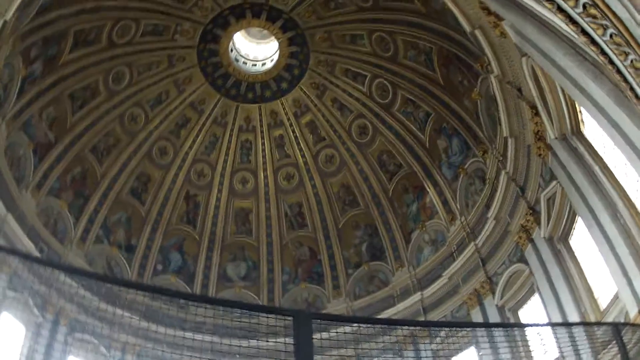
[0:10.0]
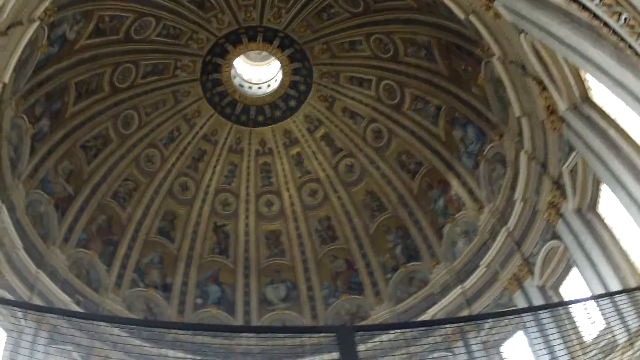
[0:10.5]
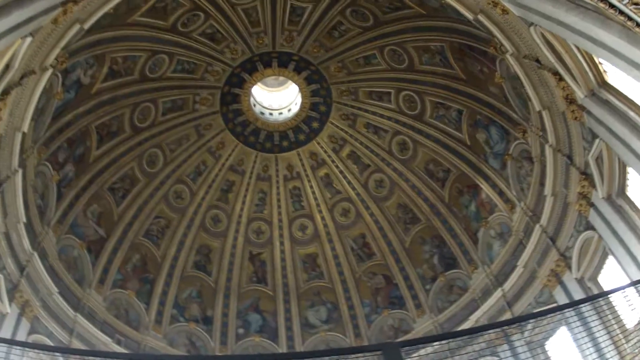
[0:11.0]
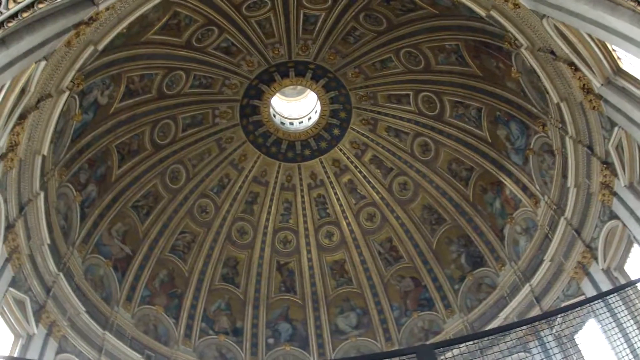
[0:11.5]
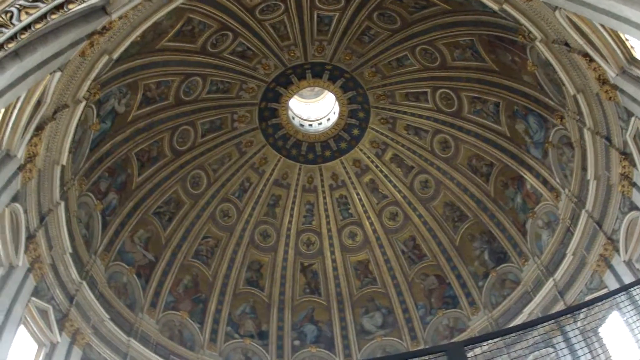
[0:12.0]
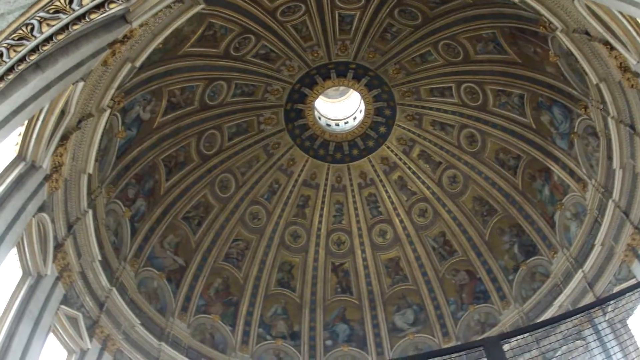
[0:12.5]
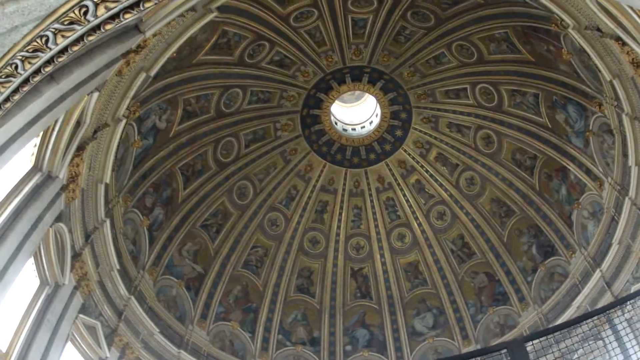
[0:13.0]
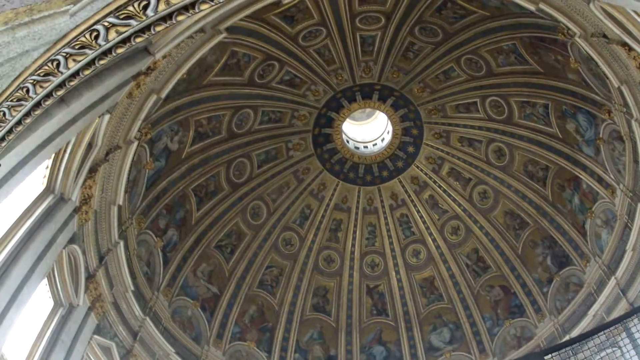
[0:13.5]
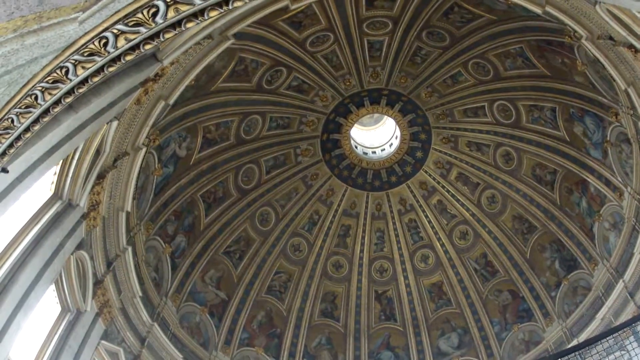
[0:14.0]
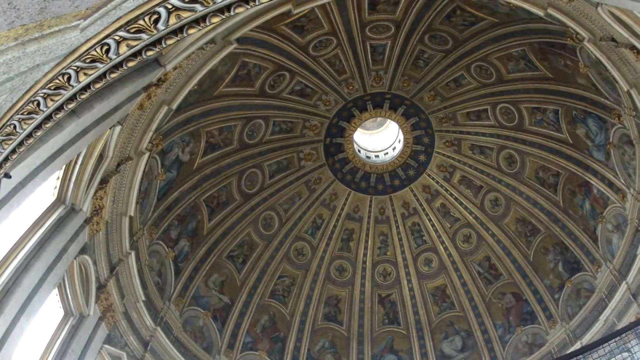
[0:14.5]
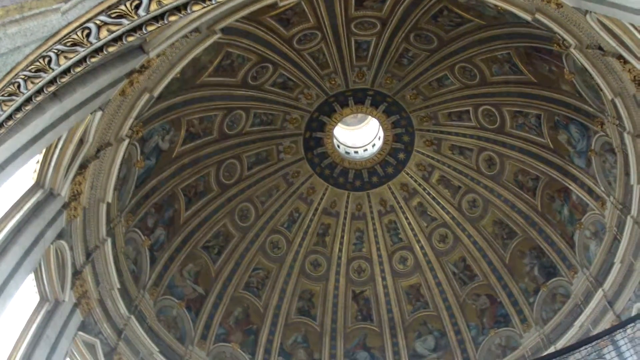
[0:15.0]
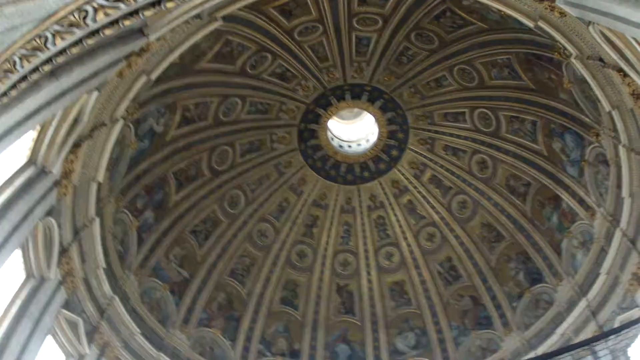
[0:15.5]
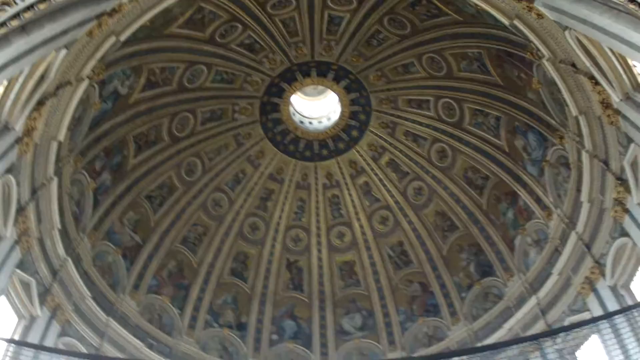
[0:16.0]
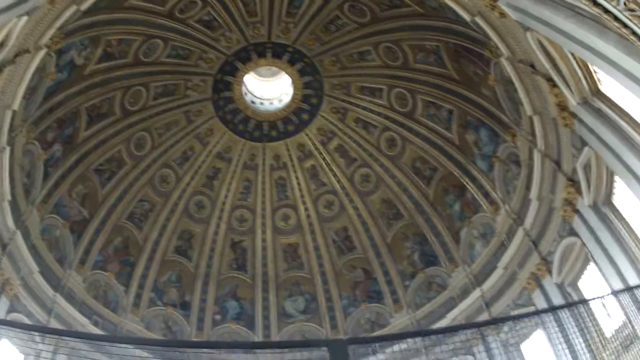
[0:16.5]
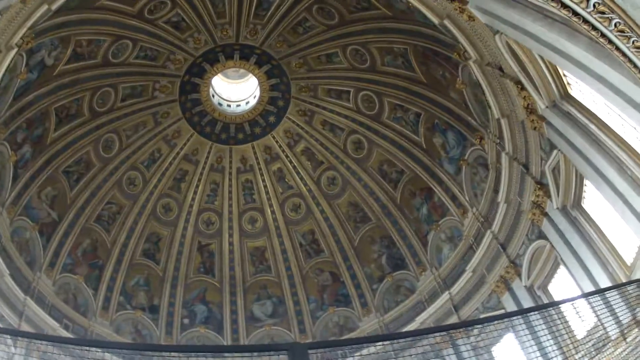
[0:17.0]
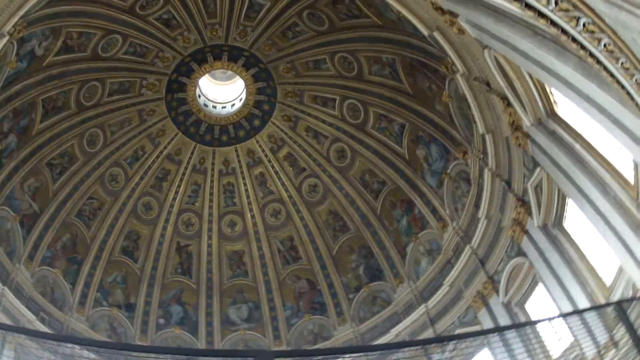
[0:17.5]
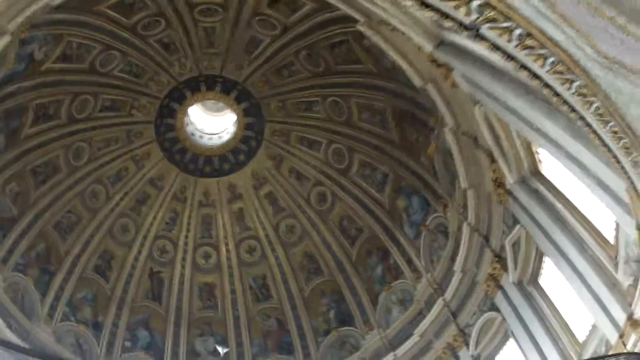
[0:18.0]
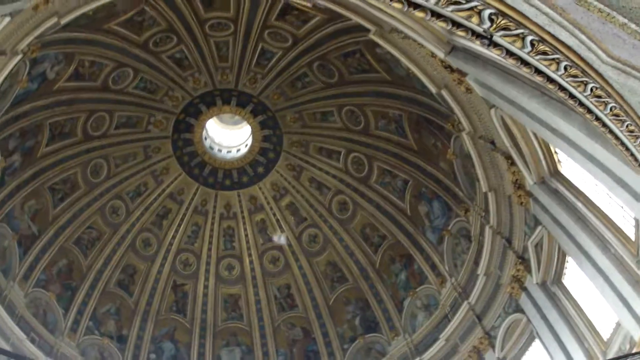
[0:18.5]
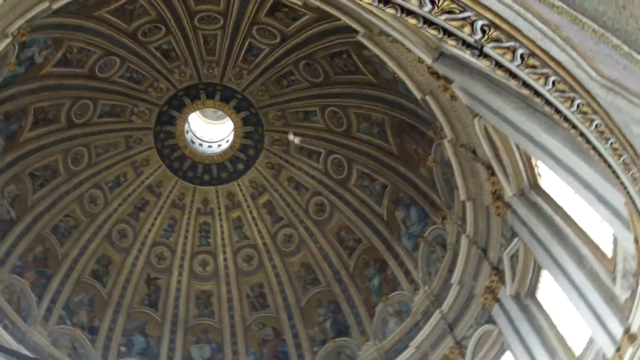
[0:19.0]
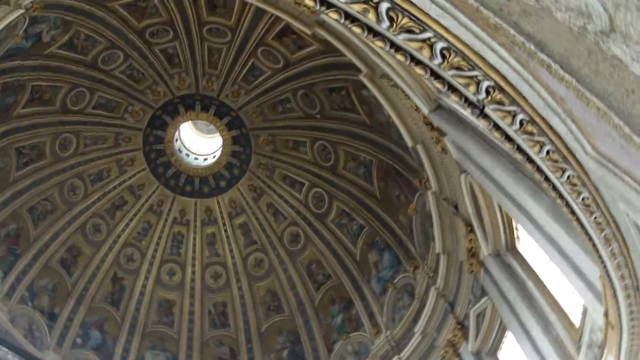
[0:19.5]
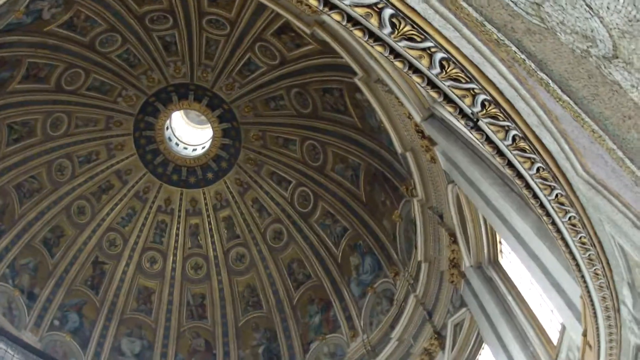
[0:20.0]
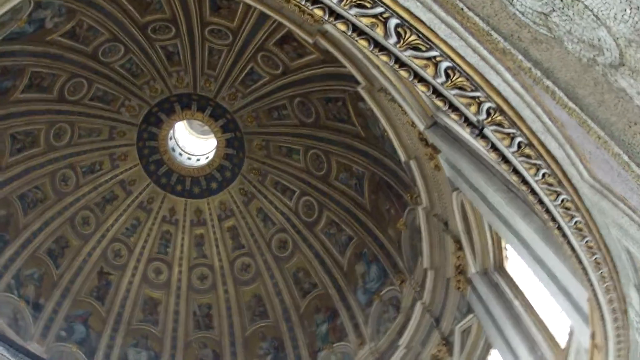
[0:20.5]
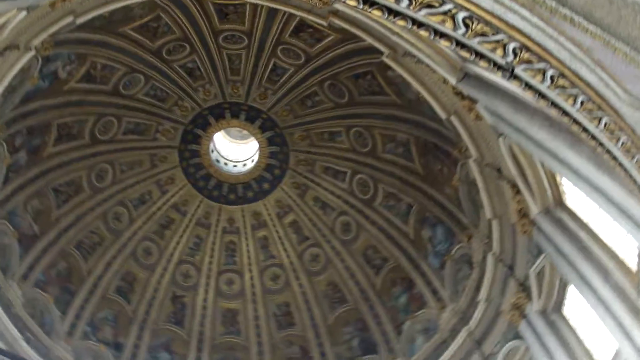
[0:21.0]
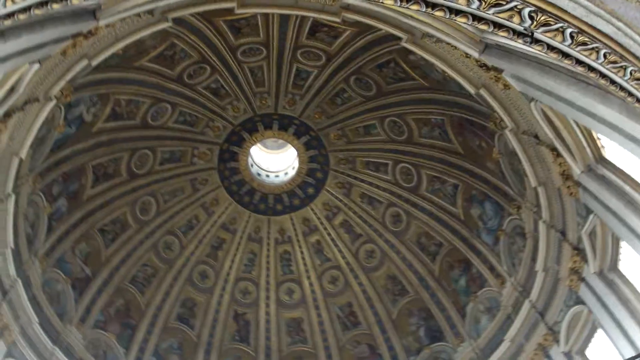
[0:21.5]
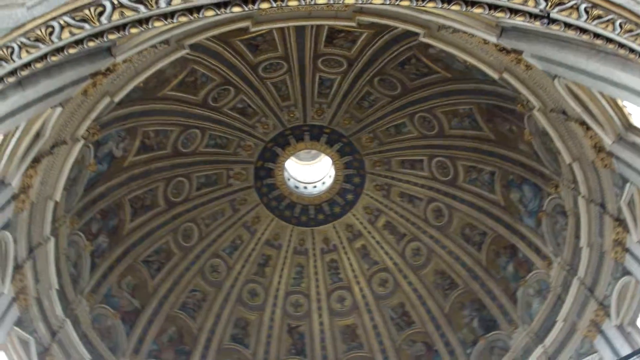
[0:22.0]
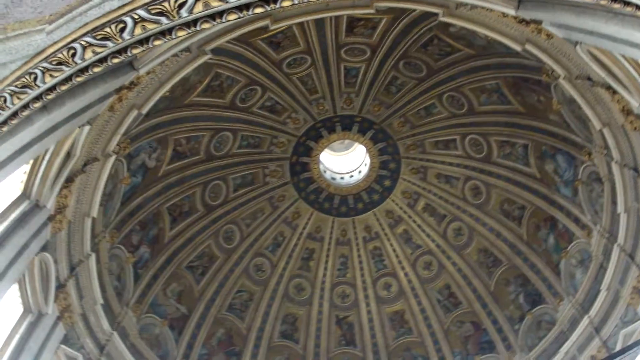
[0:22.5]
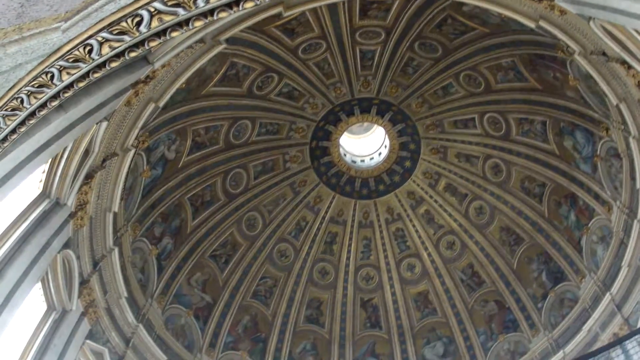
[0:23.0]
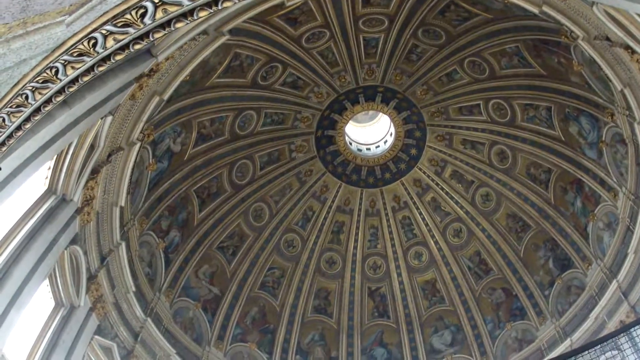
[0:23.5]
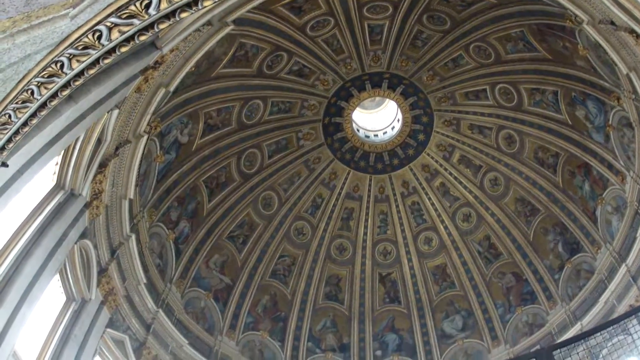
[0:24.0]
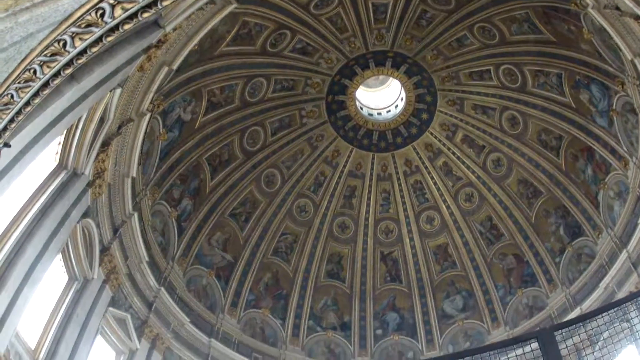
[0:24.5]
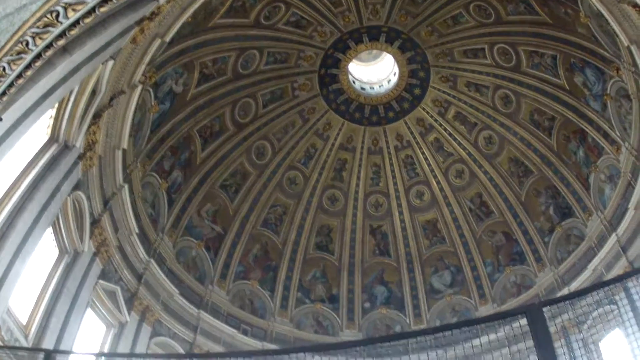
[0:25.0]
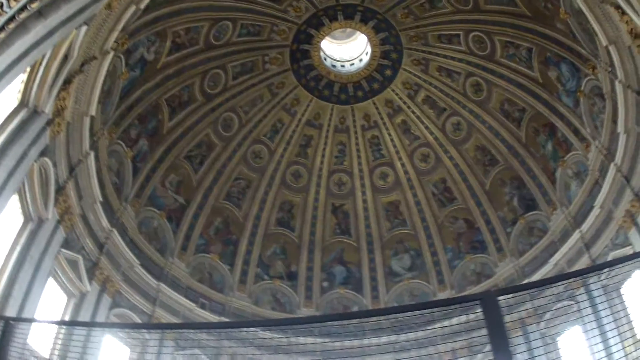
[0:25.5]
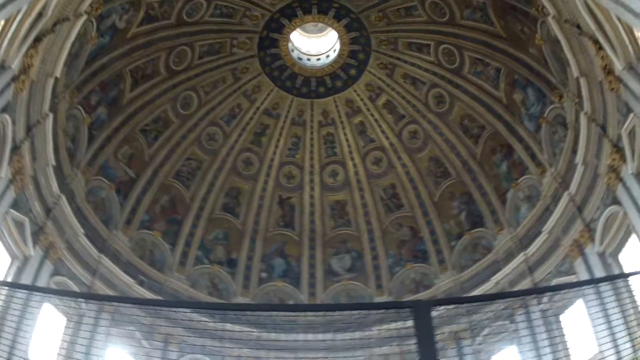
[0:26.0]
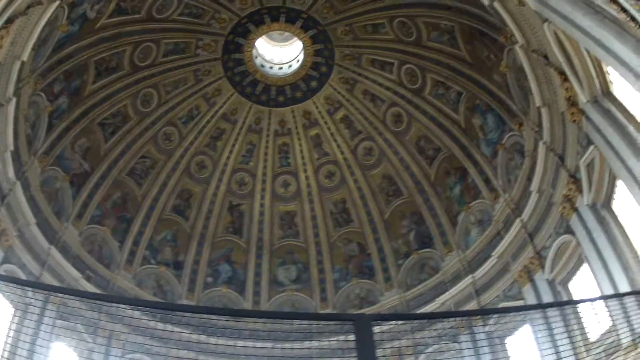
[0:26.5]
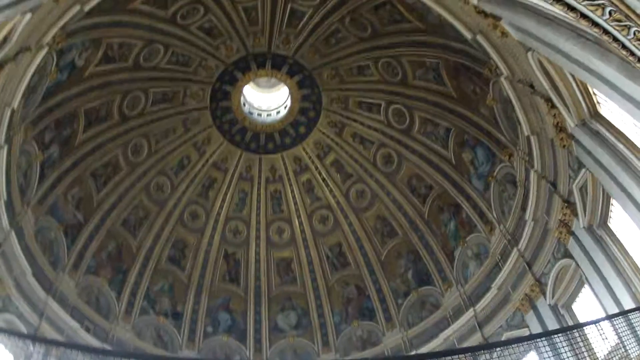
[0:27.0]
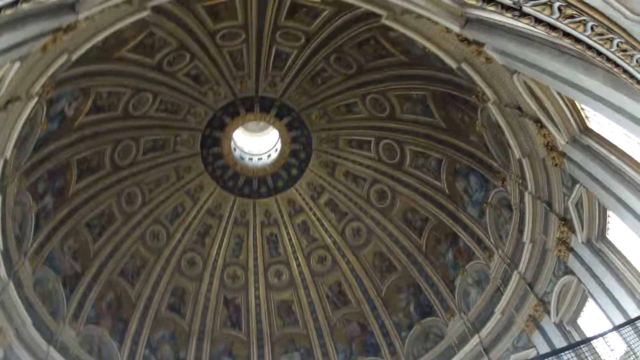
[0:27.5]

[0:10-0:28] The same dome is shown, with light shining through it that appears to come from the sun rather than a light bulb: there is a hole at the very high top where the sun peeks in. More of the building is visible, mostly the dome but also the walls. A black fence is around the area, which may be part of a public religious place or possibly a museum, perhaps sectioned off. The main focus is the dome and its paintings, which have a religious feel, in brown, beige, a little blue and maybe some burgundy, a color scheme somewhat reminiscent of stained glass. Many little windows run around the walls, with a lot of sunlight peeking in. The view rotates around so that pretty much the whole dome can be seen.